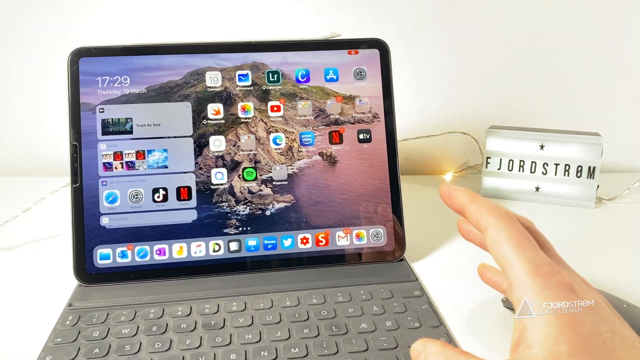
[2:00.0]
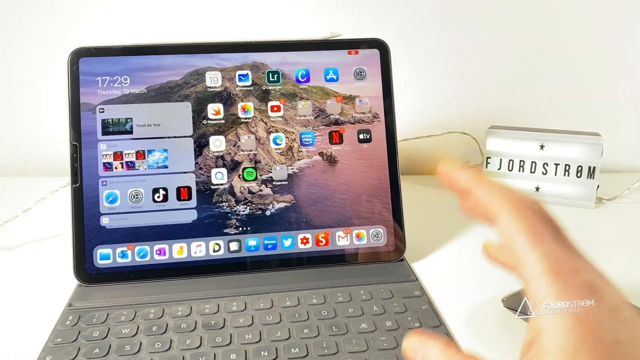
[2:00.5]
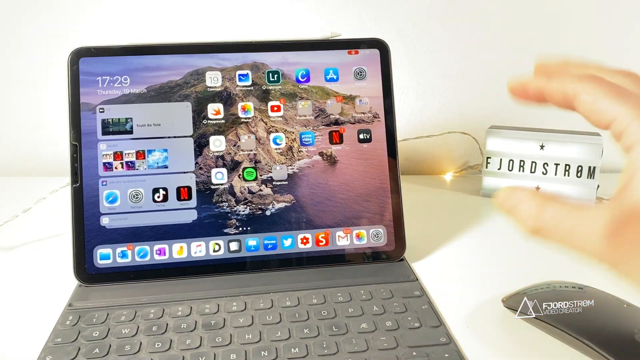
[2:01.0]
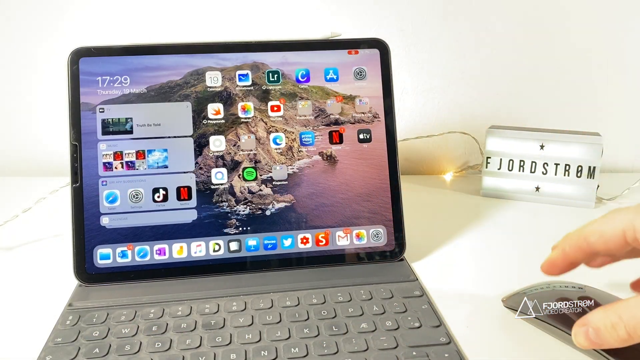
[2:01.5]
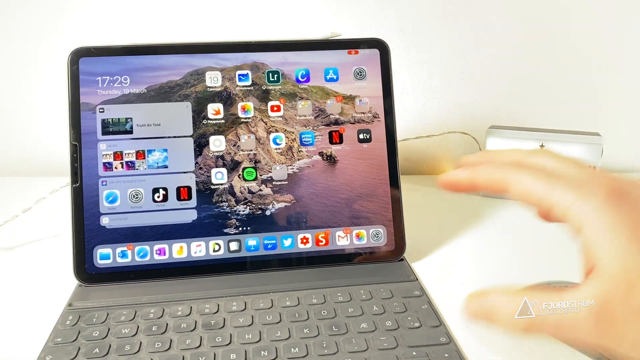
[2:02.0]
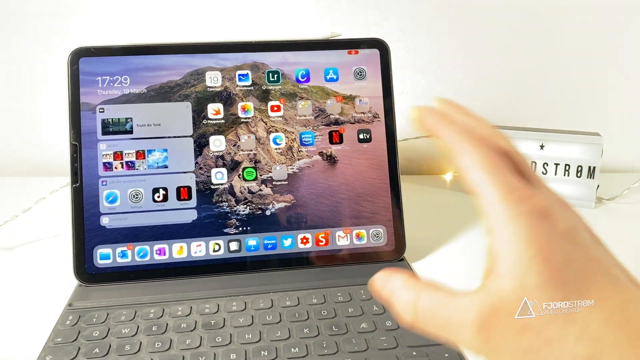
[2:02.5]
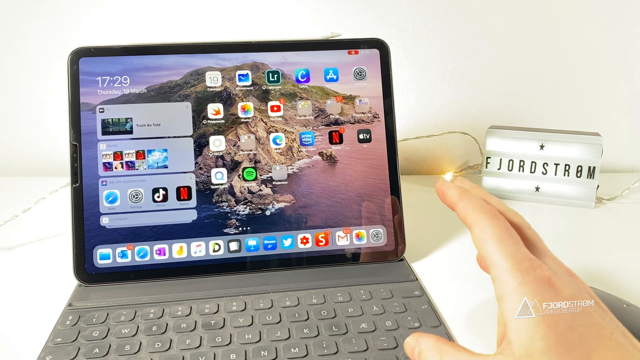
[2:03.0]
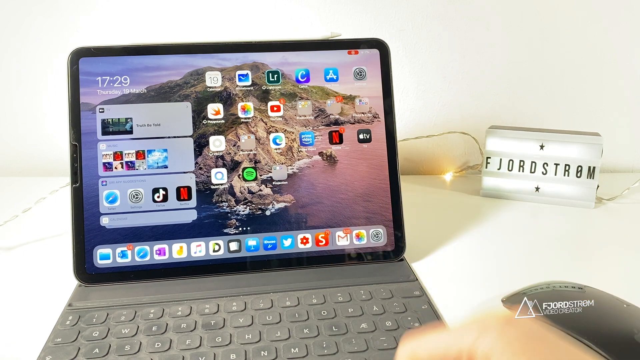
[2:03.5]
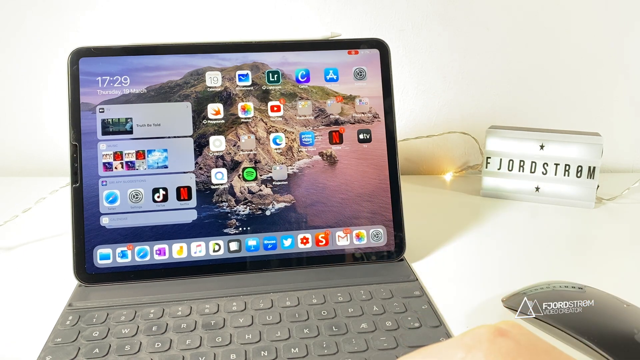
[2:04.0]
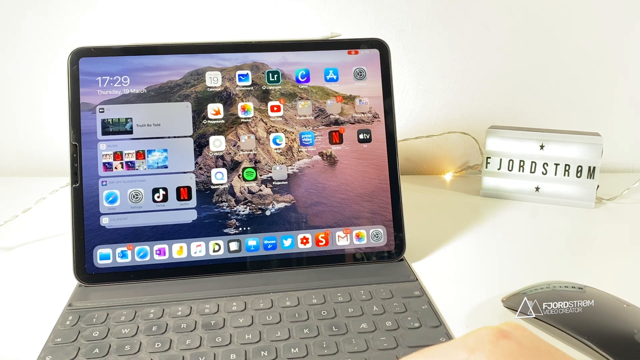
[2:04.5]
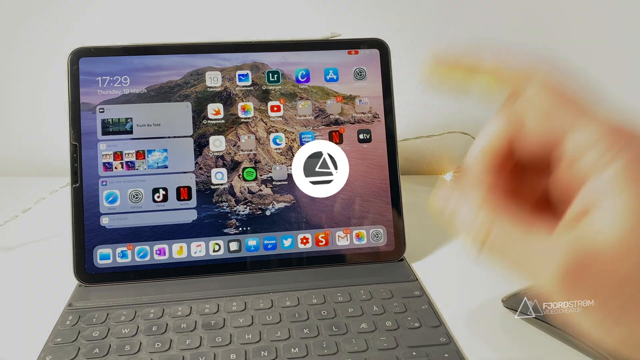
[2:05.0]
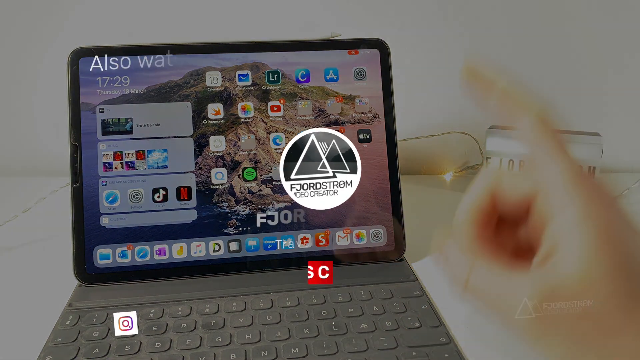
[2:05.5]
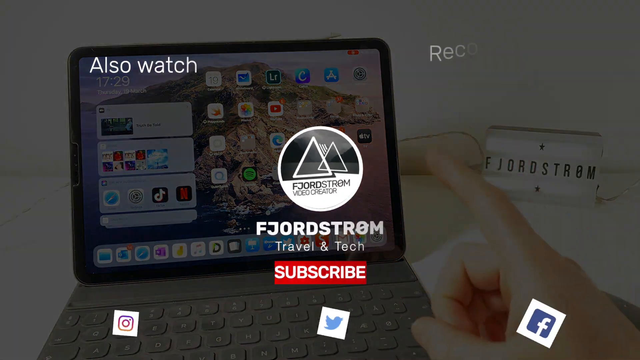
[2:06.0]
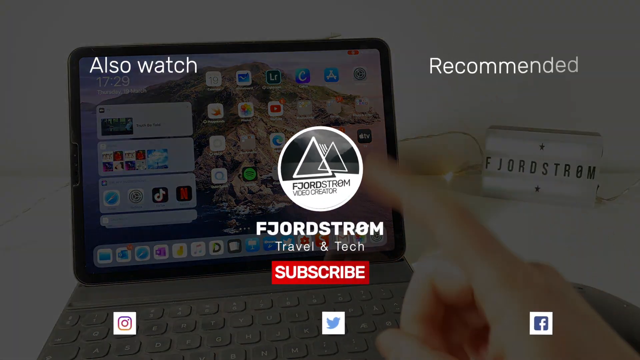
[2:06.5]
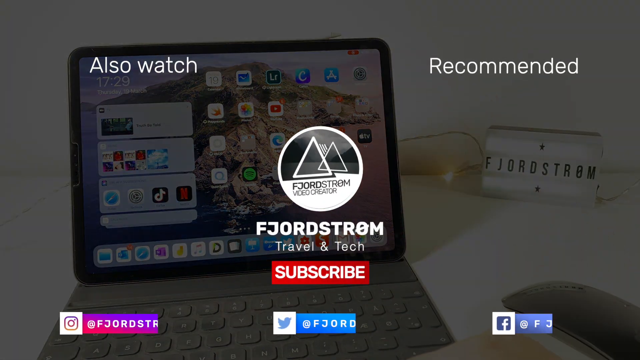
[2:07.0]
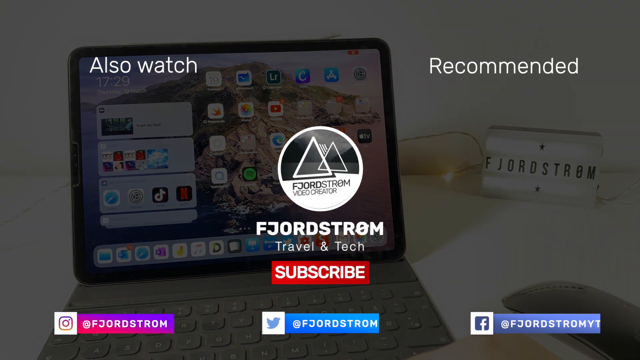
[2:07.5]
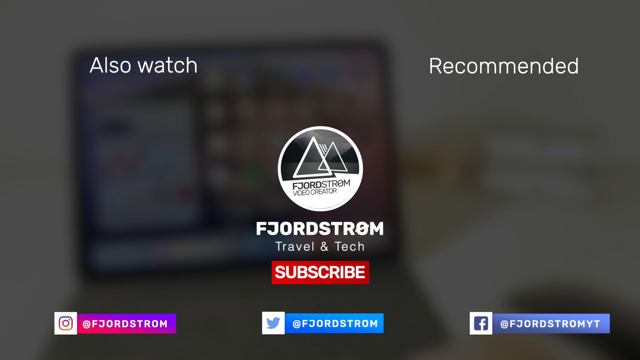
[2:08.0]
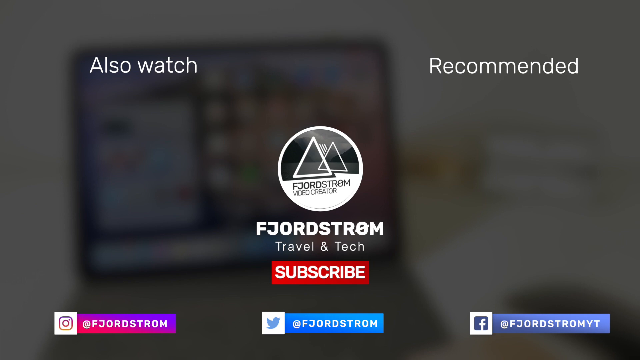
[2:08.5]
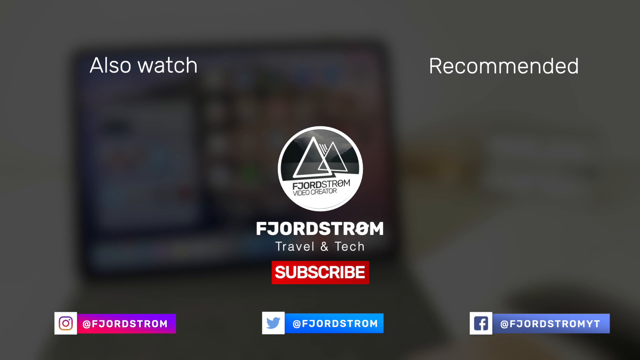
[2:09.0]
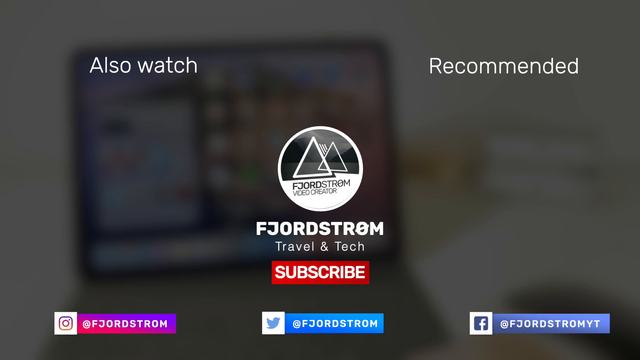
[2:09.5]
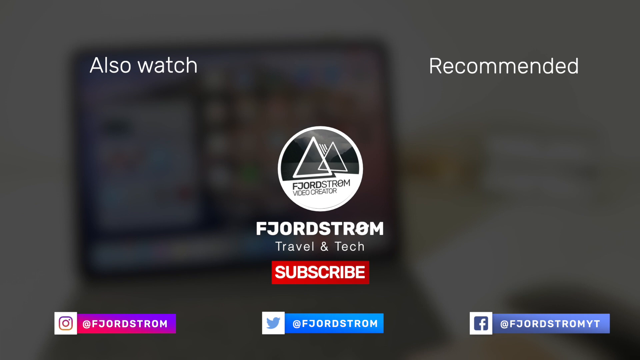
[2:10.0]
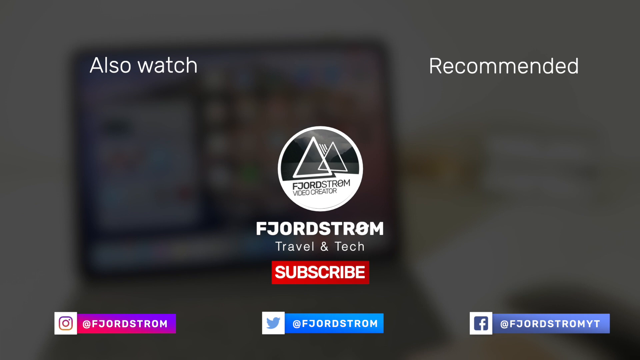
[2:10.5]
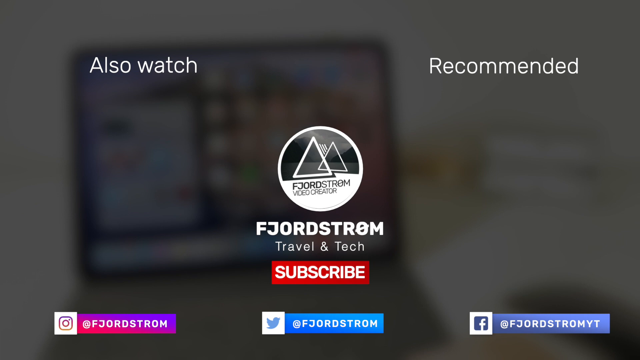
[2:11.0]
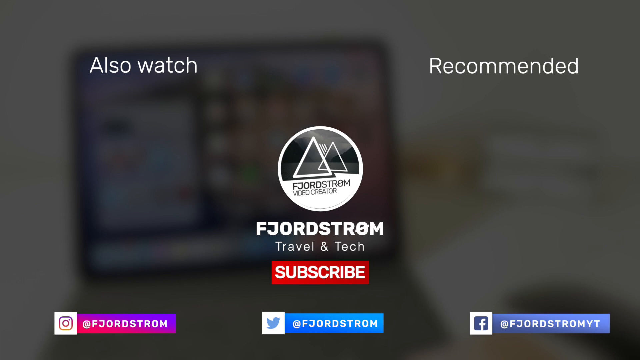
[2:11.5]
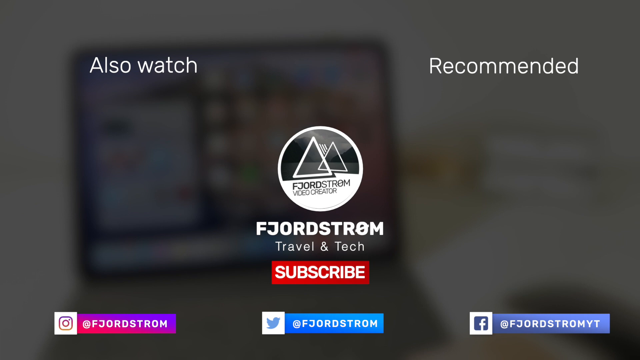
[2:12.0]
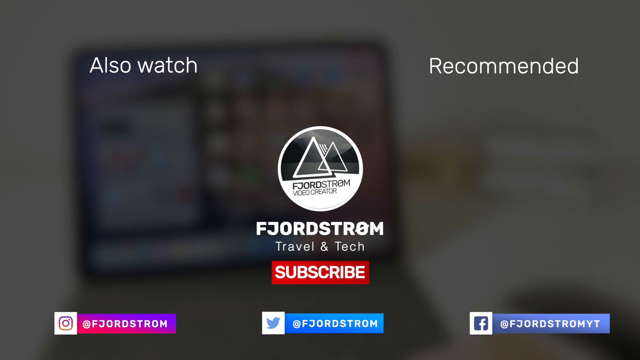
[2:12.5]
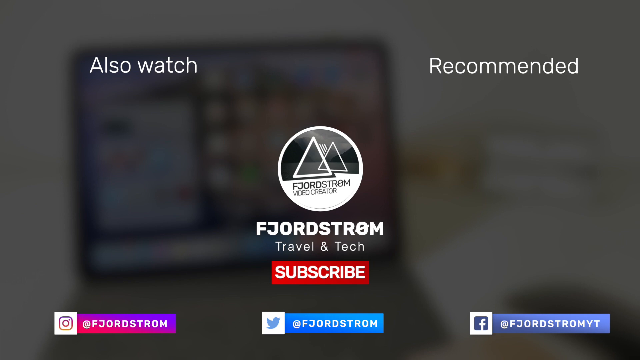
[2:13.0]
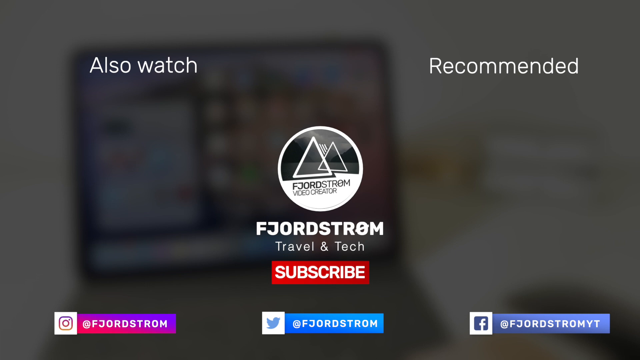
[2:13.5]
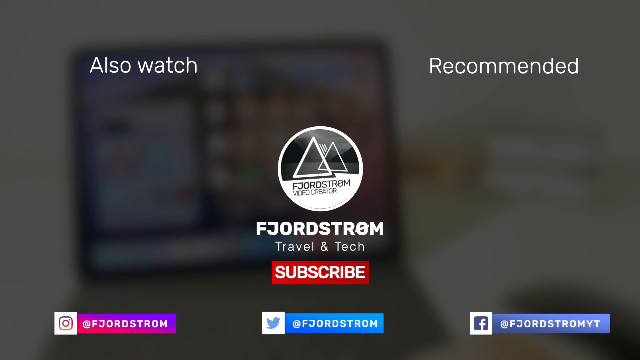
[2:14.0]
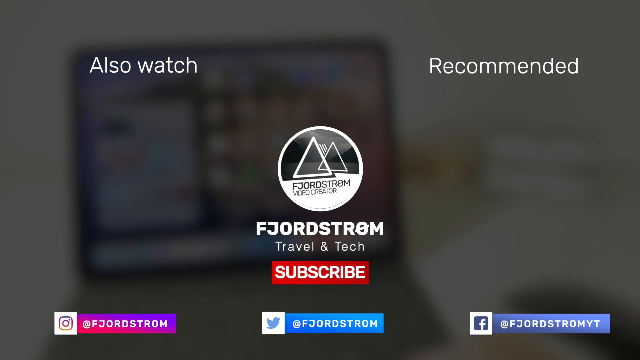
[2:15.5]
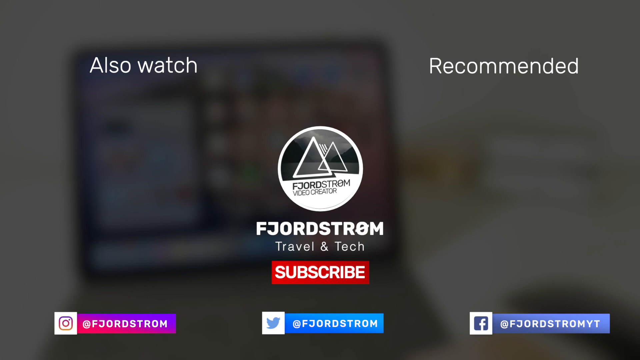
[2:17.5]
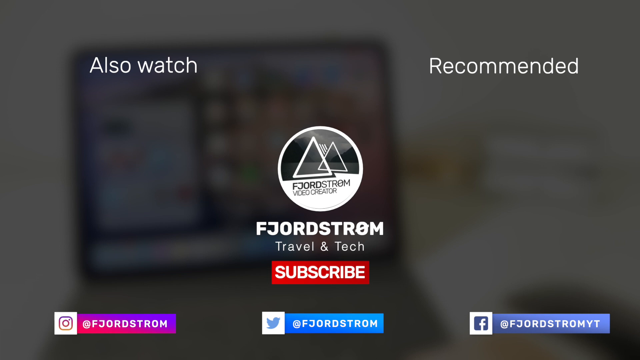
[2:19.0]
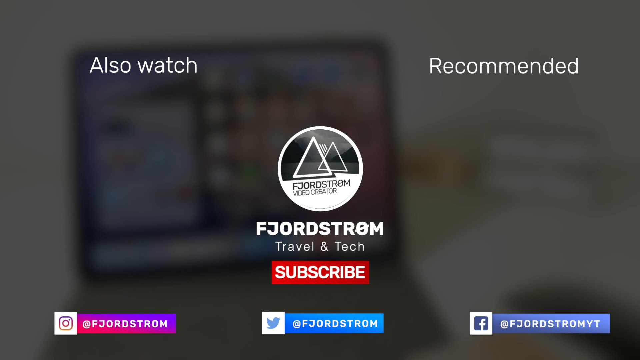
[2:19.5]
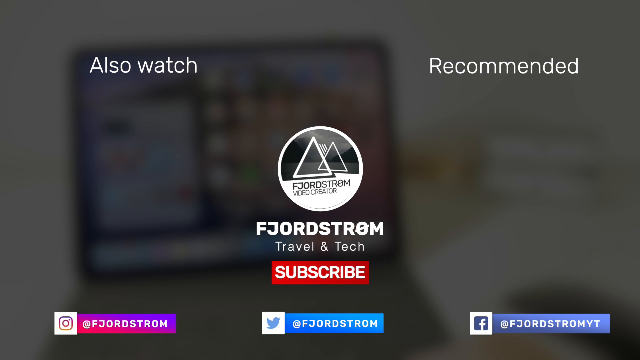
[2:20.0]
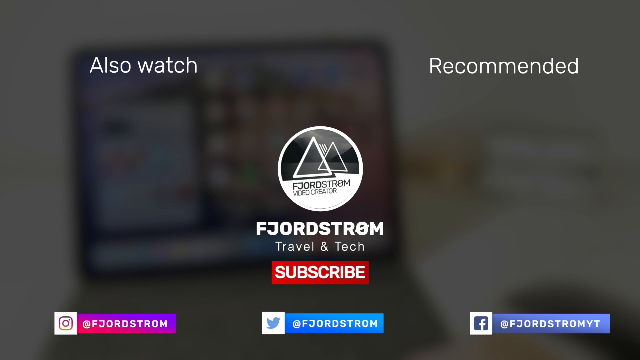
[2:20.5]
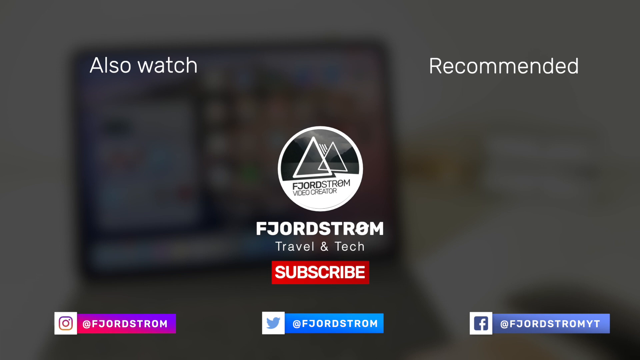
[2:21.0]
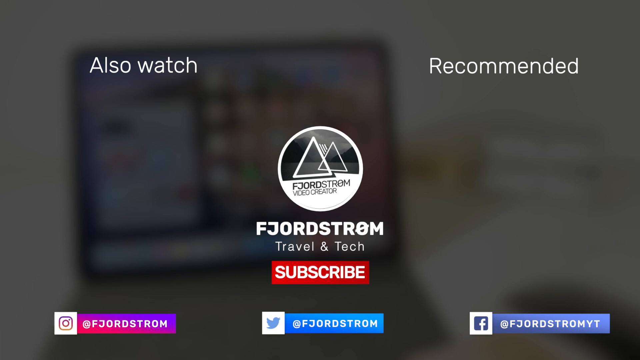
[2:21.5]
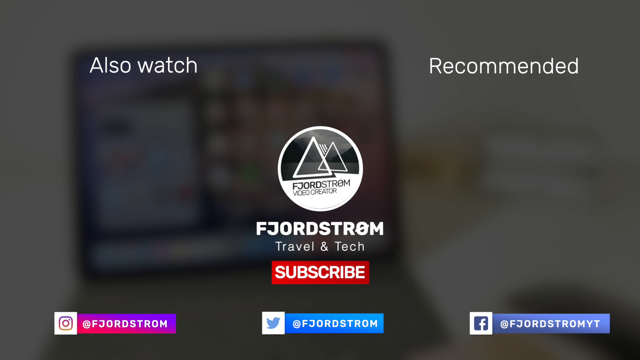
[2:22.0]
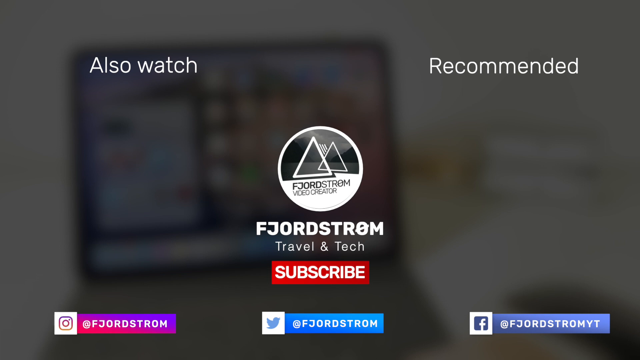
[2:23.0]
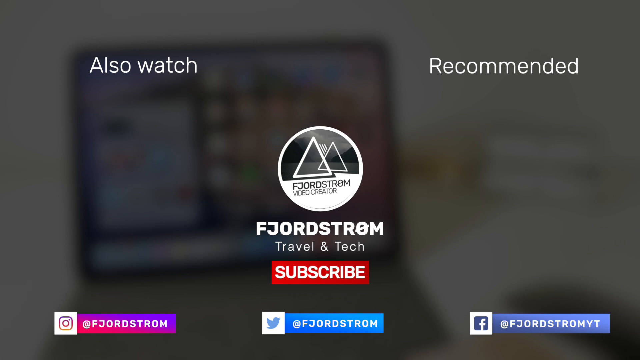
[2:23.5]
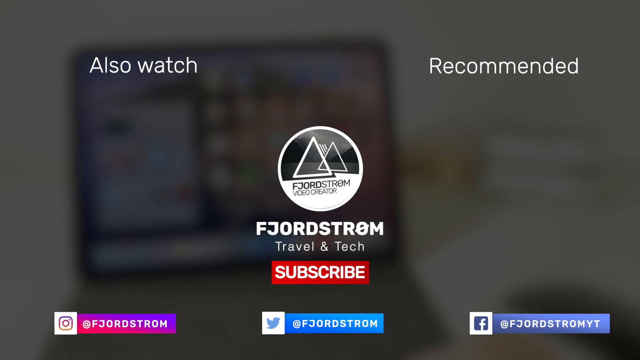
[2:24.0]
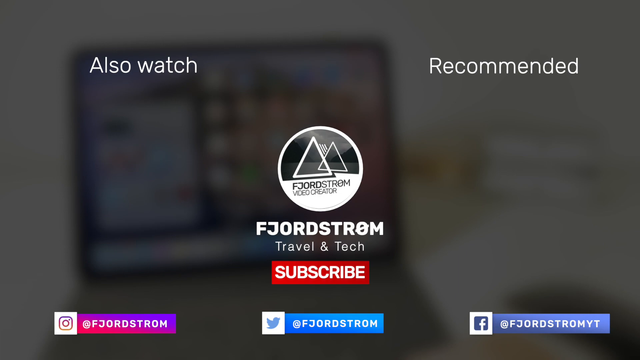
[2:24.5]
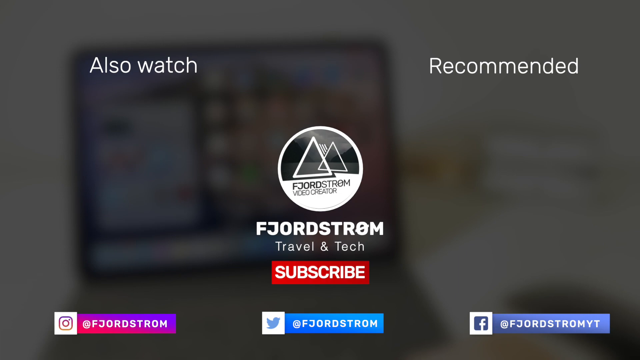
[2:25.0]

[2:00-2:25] A person has a tablet computer in front of him, its screen showing icons such as Netflix, TikTok, Lightroom, Canva, YouTube and Photos. He moves his hand as if explaining something, puts his hand toward the mouse, then continues moving his hand as he explains. Logos pop up on screen for "F. George Strum Video Creator" and "F. George Strum Travel and Tech," with a YouTube subscribe button and Instagram, Twitter and Facebook logos. Text reads "also watch and recommend it," and the social media usernames are shown: FGeorgeStrum for Instagram, at FGeorgeStrum for Twitter, and at FGeorgeStrumYT for Facebook. This stays on the screen for a while, and then the video ends.